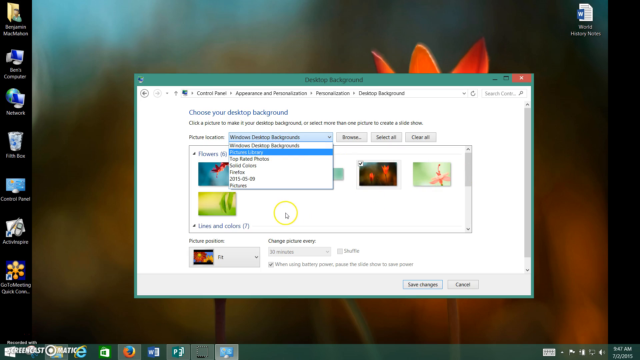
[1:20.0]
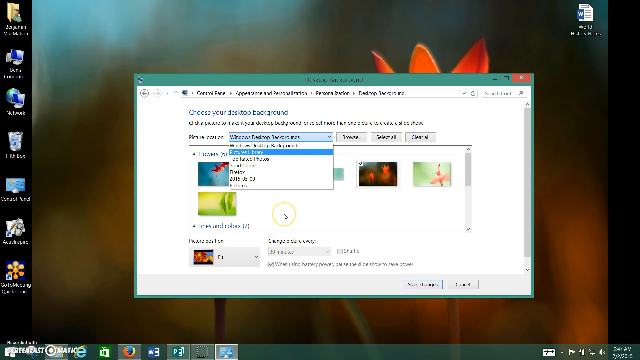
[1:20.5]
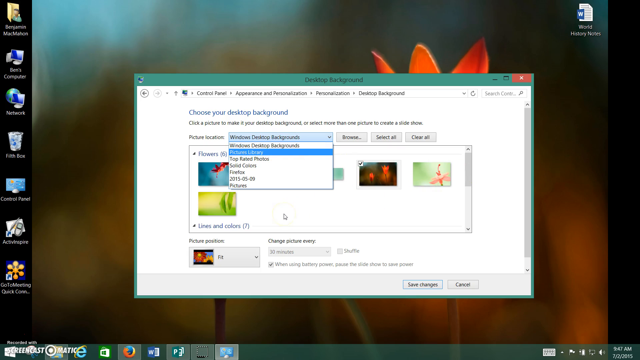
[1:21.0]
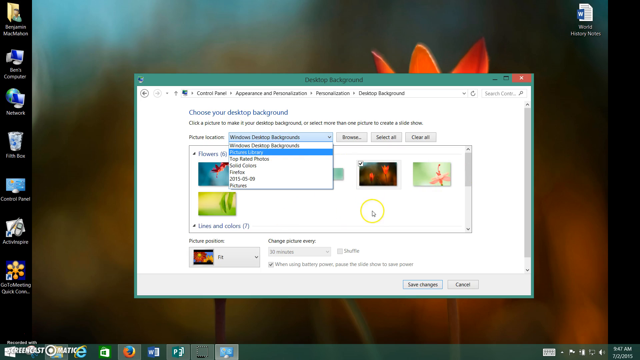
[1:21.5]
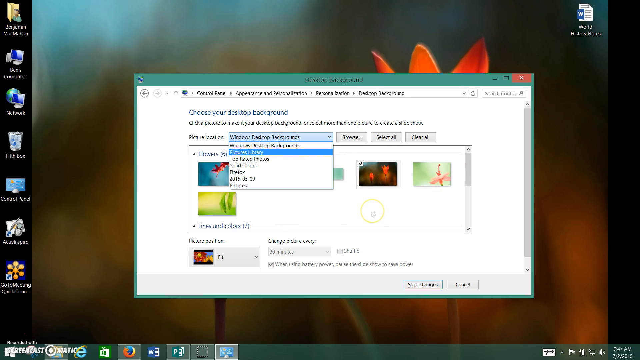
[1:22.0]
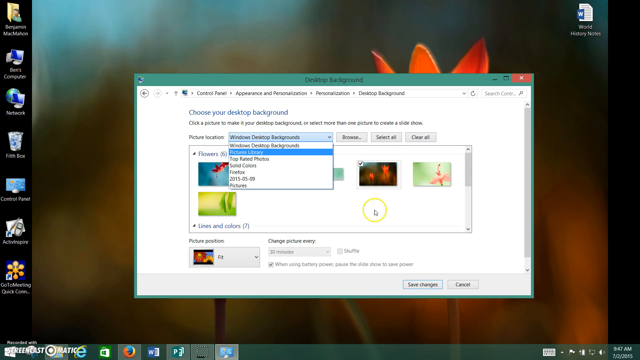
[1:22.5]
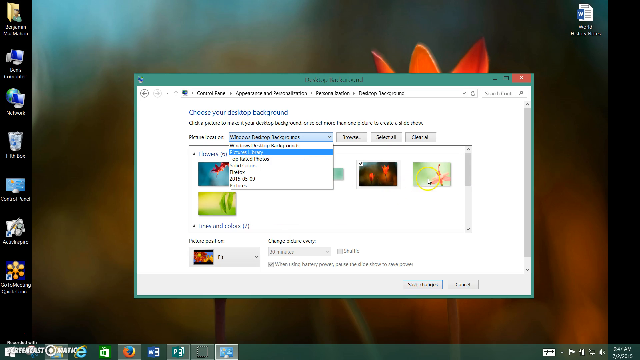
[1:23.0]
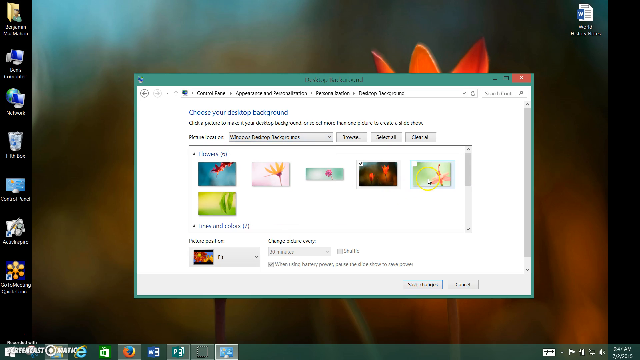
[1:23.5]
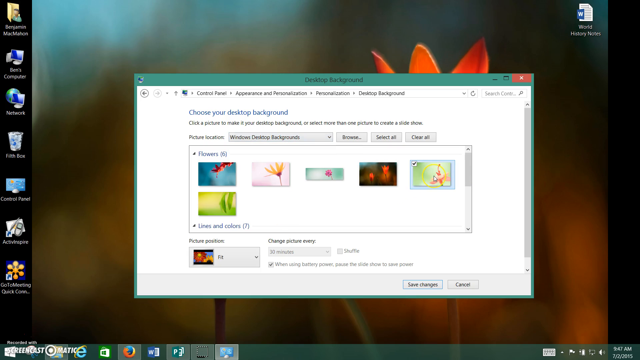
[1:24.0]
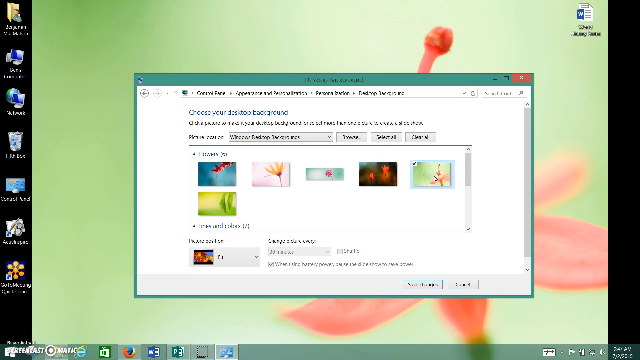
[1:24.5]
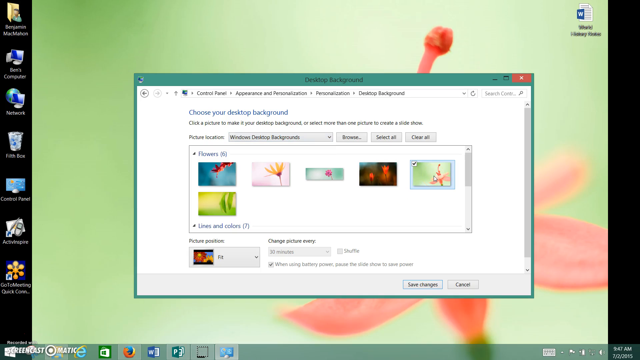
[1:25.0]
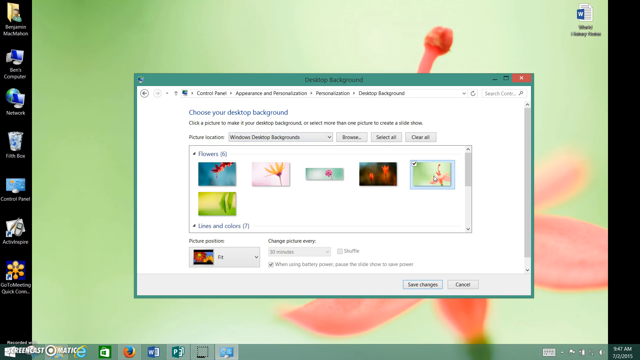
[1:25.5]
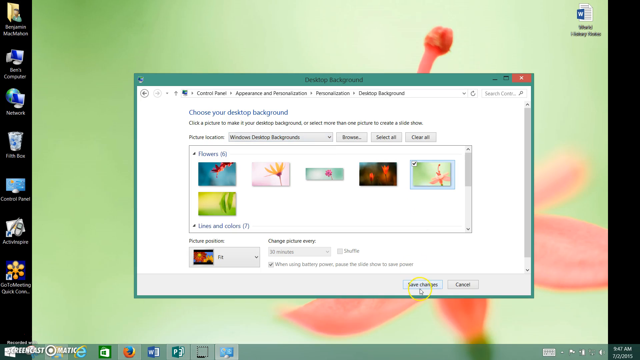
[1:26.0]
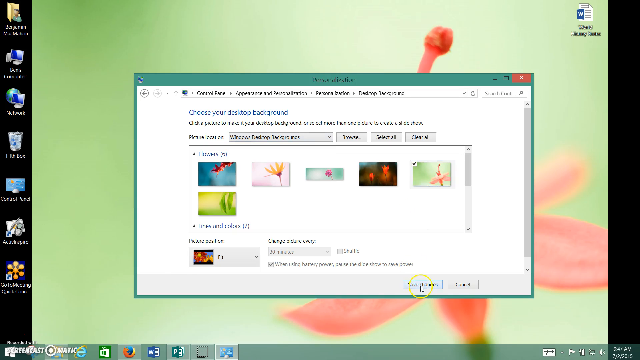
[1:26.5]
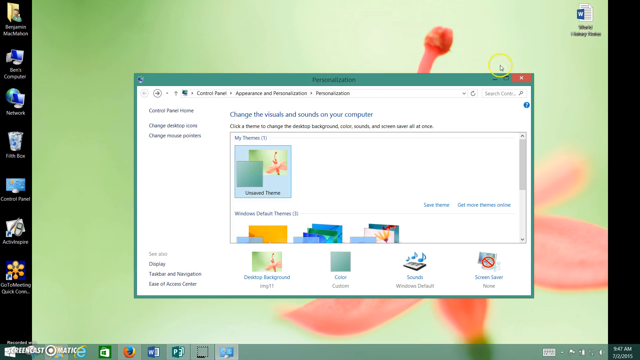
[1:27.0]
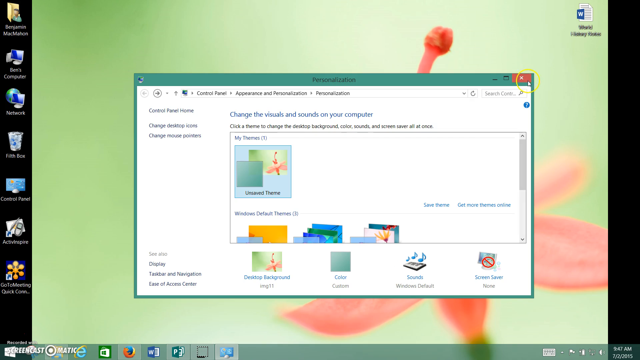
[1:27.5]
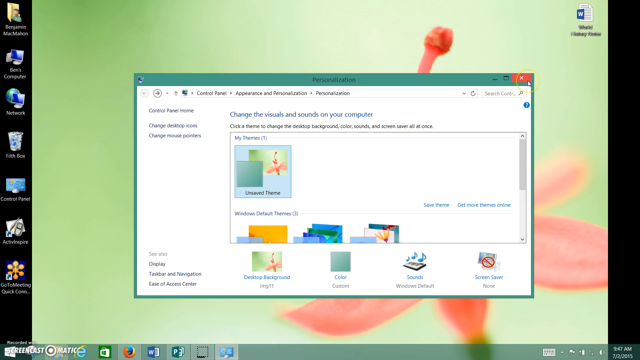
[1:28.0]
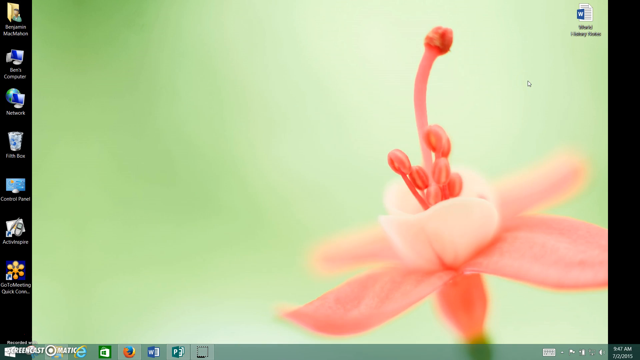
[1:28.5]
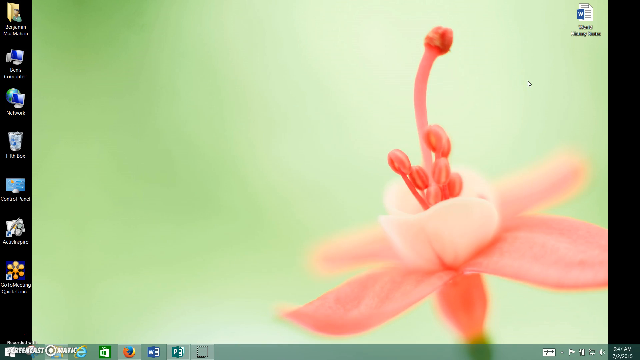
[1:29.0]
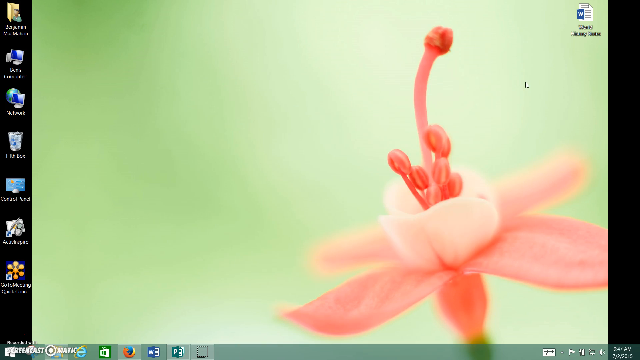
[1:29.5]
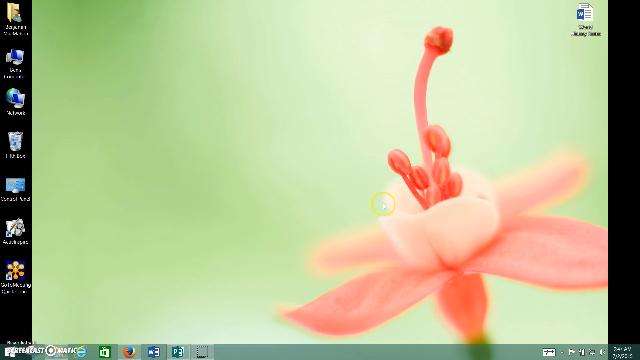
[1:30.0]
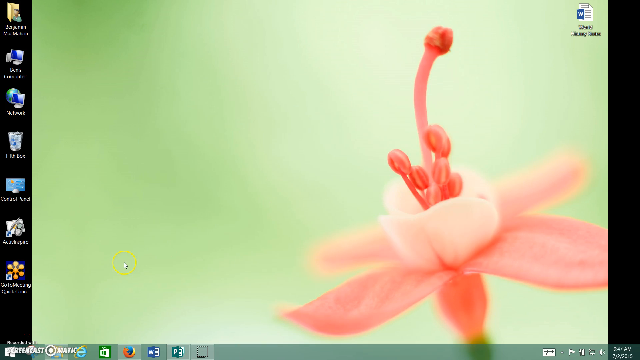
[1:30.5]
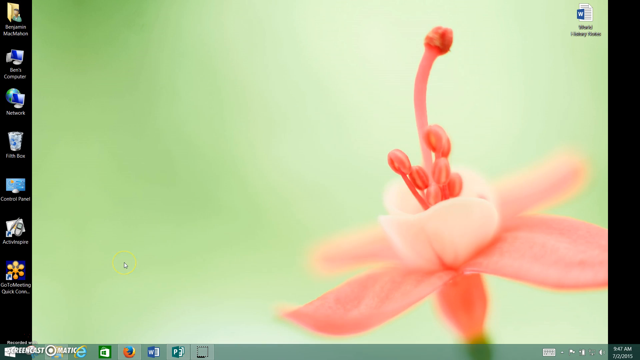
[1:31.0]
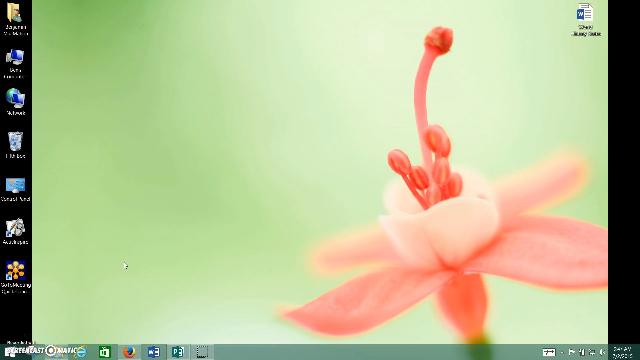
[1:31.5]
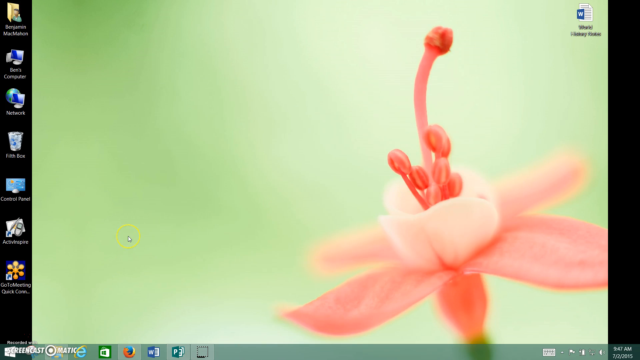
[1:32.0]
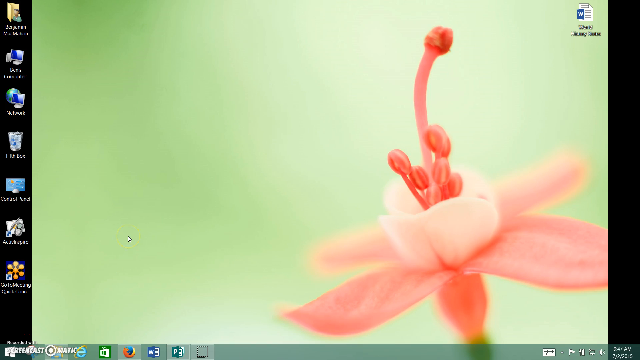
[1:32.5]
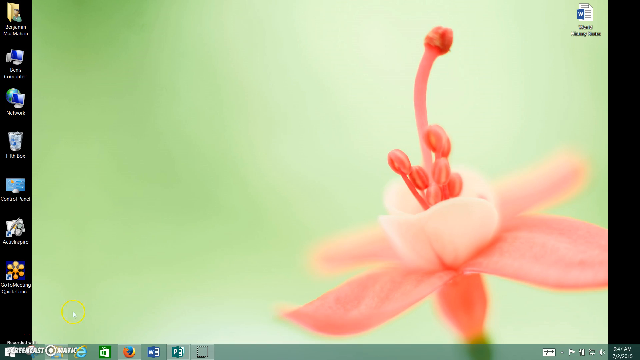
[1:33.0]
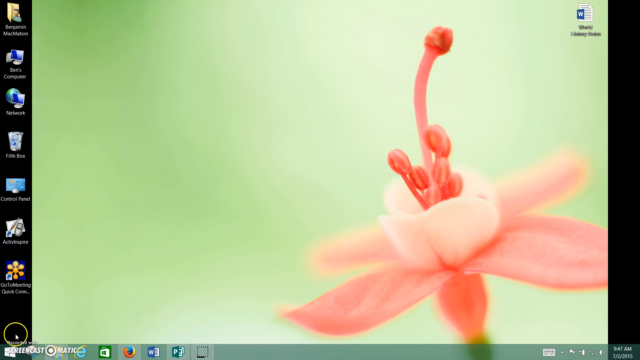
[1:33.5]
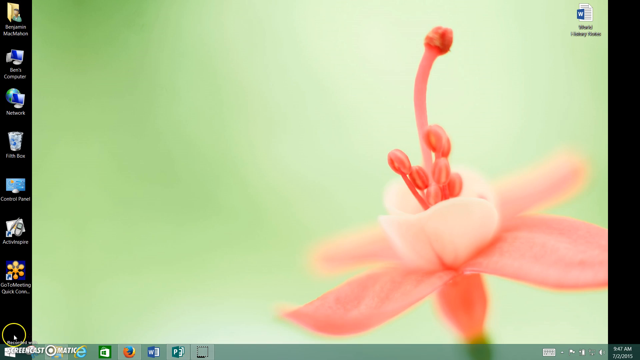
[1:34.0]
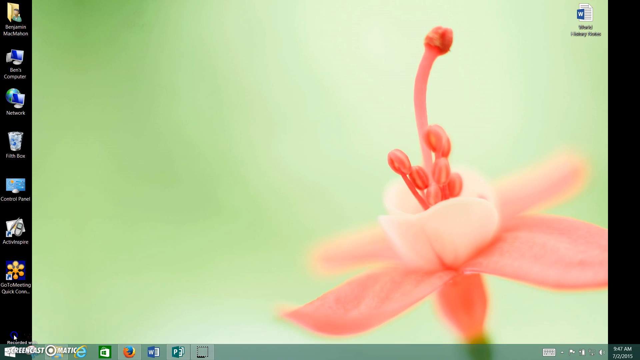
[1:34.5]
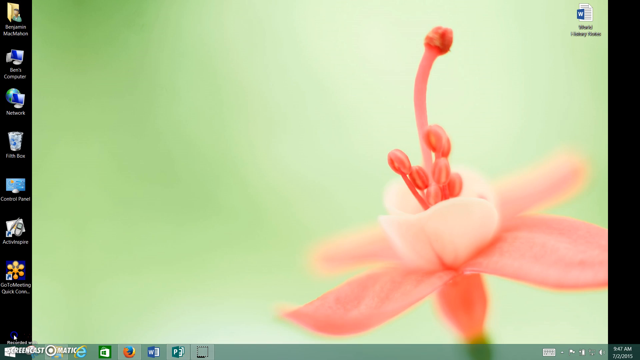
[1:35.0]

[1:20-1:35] The Windows desktop background shows two red tulip flowers side by side against a dark background. On the left side of the screen are icons including My Computer, Network, the Recycle Bin and the Control Panel, and in the top right corner is a single Word document for World History Notes. The Desktop Background window is open in the personalization settings, and the user has opened the drop-down menu for picture location, which is set to the Windows Desktop Backgrounds folder showing default backgrounds. The options shown are Windows Desktop Backgrounds, Pictures Library, Top Rated Photos, Solid Colors, Firefox, a folder labeled 2015-05-09, and Pictures. The user leaves the location on Windows Desktop Backgrounds and clicks one of the default photos, changing the desktop from the two red flowers to a single pink flower against a green background. The user saves the changes, closes the personalization window and shows the new pink flower background on the desktop.